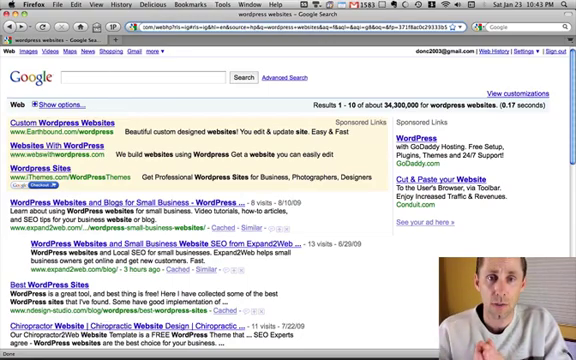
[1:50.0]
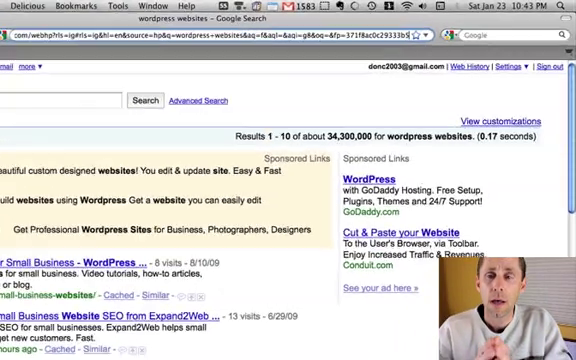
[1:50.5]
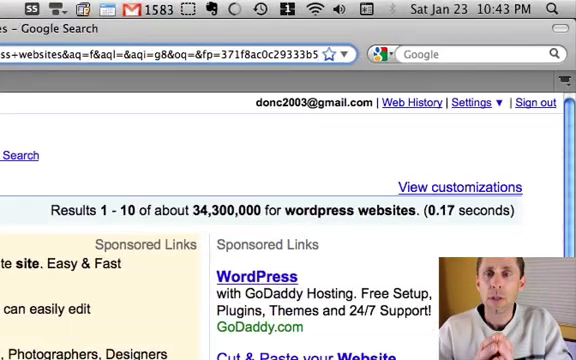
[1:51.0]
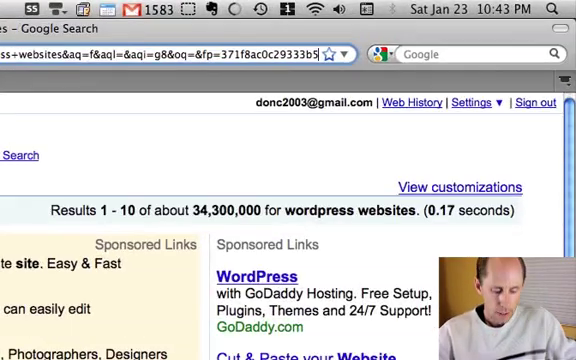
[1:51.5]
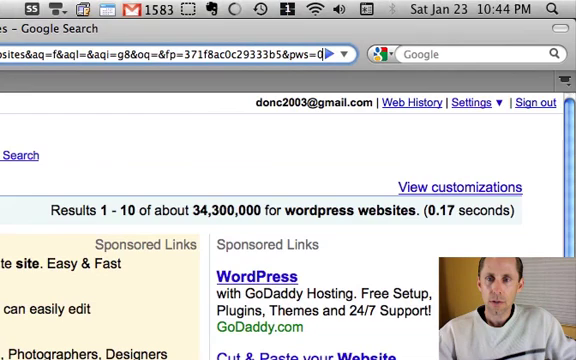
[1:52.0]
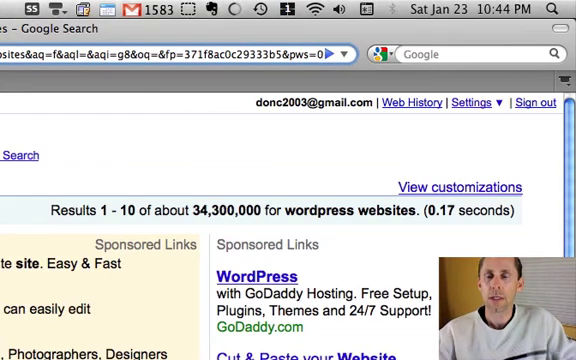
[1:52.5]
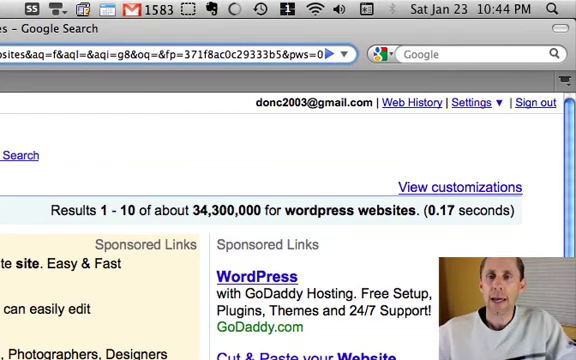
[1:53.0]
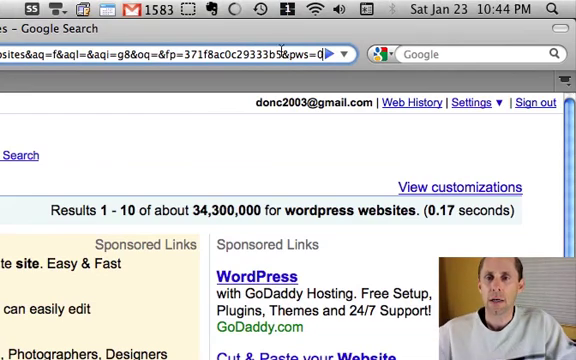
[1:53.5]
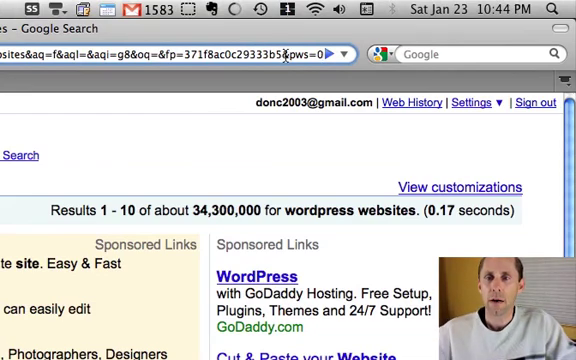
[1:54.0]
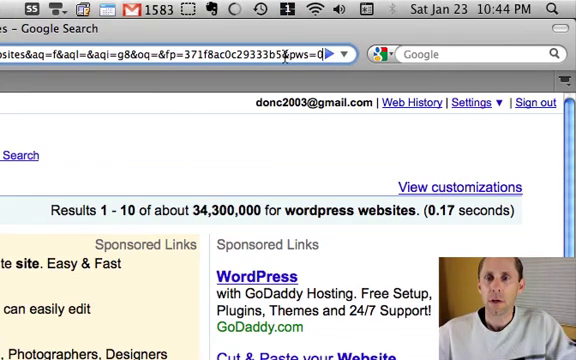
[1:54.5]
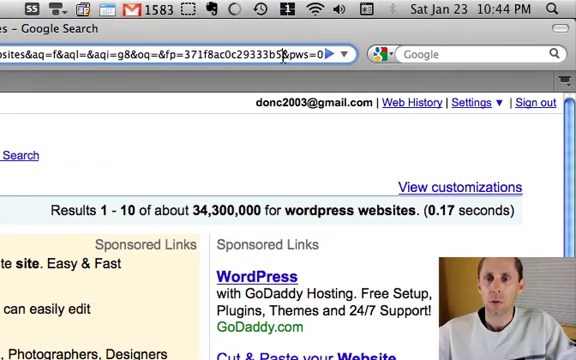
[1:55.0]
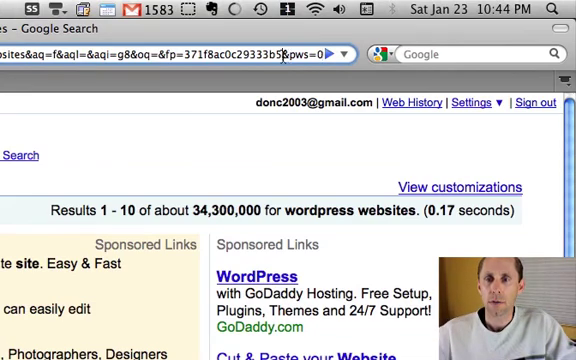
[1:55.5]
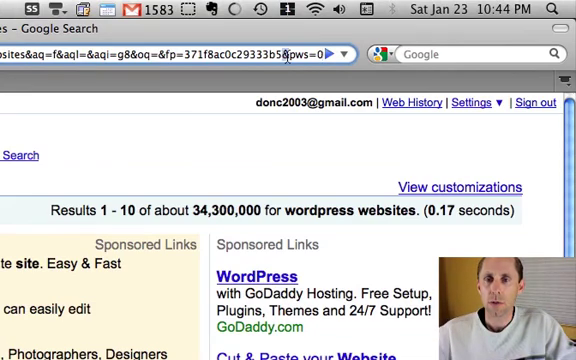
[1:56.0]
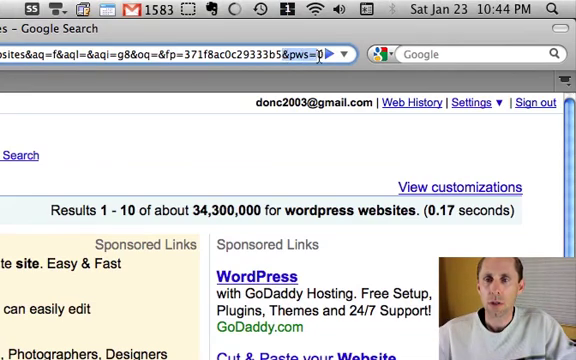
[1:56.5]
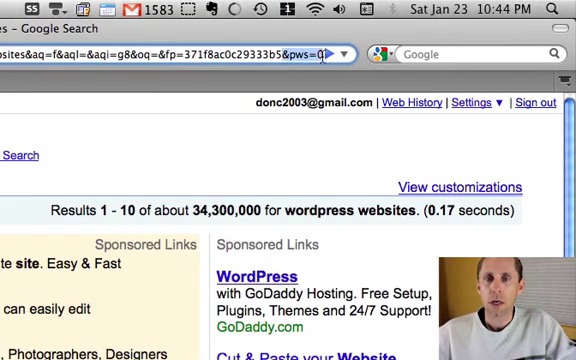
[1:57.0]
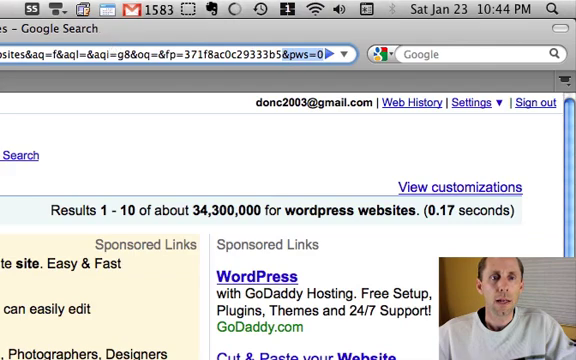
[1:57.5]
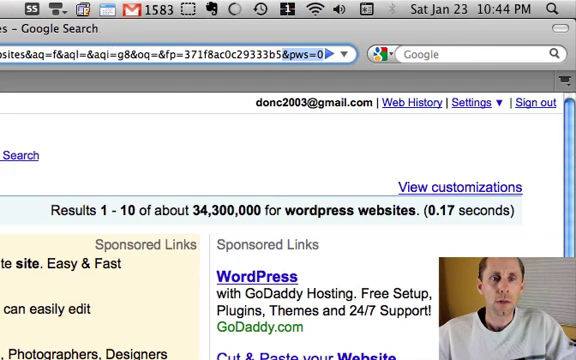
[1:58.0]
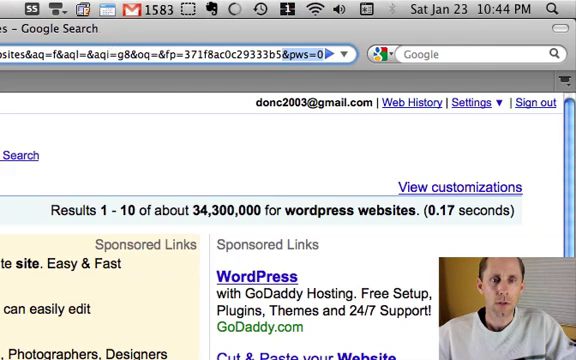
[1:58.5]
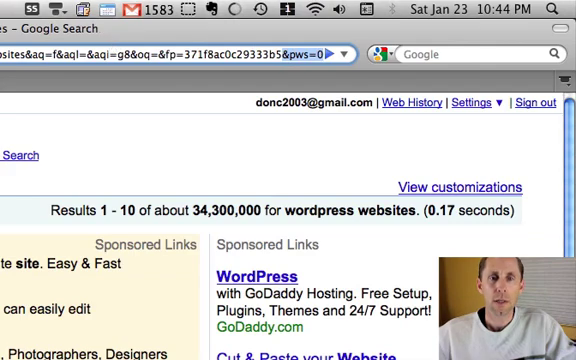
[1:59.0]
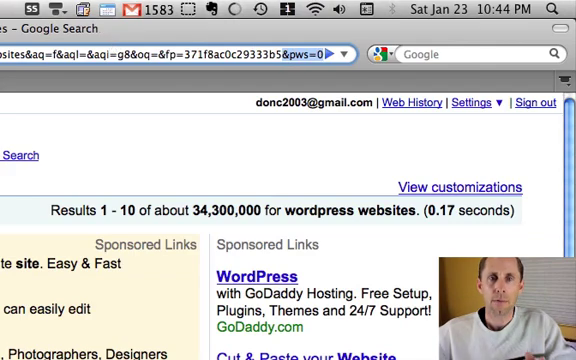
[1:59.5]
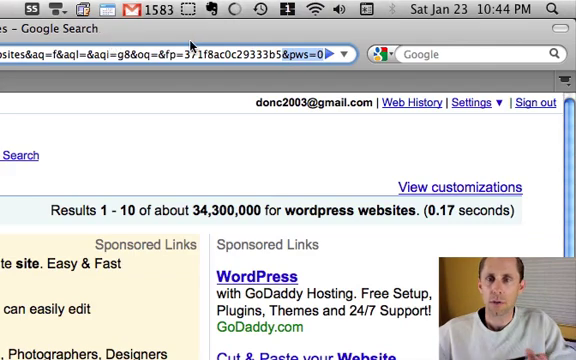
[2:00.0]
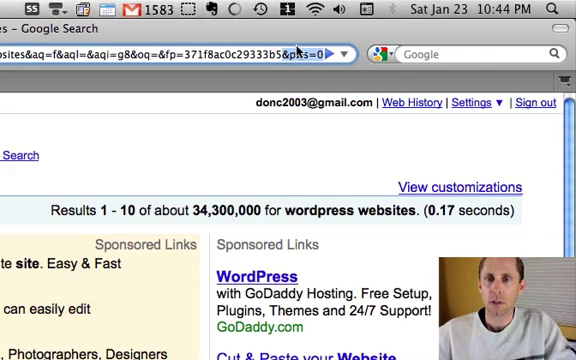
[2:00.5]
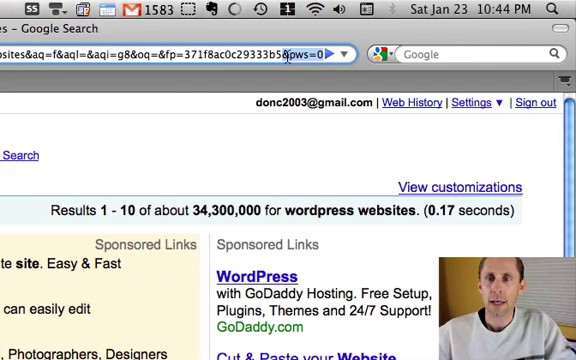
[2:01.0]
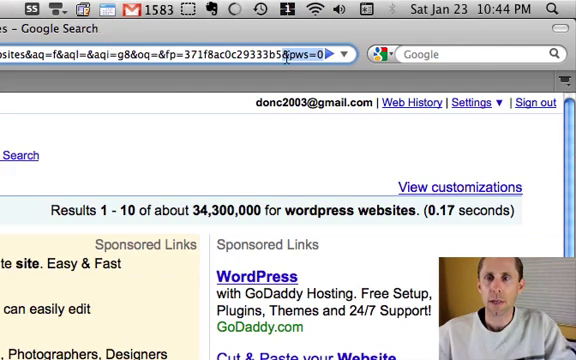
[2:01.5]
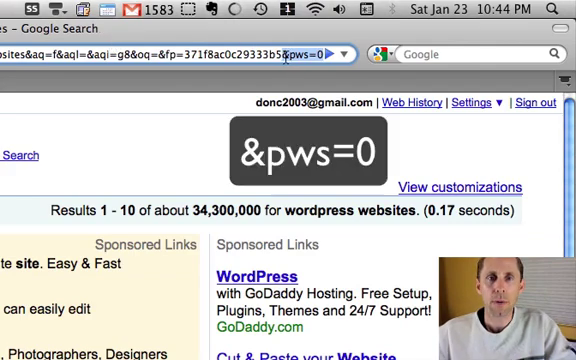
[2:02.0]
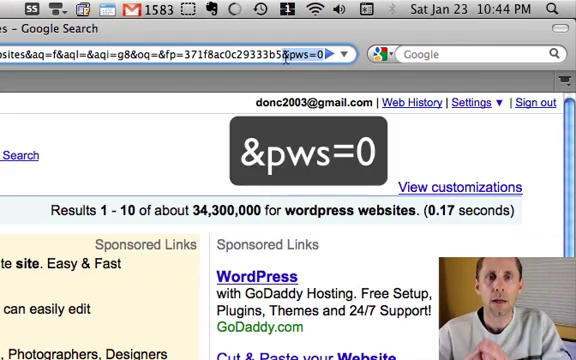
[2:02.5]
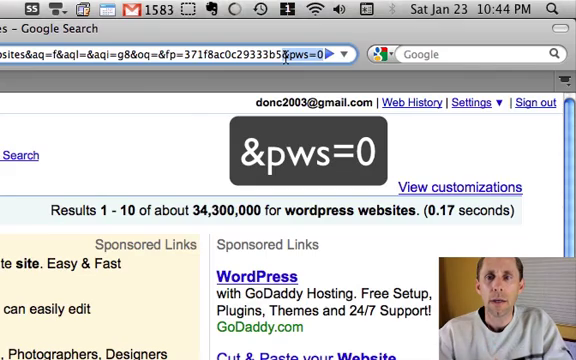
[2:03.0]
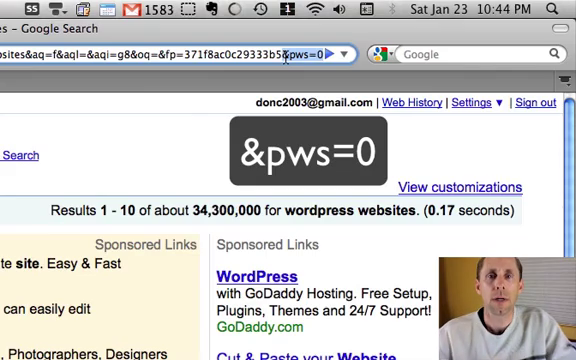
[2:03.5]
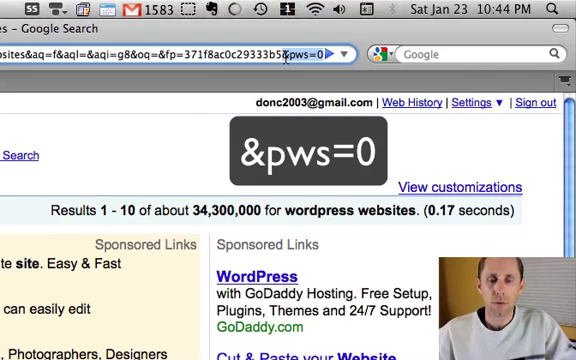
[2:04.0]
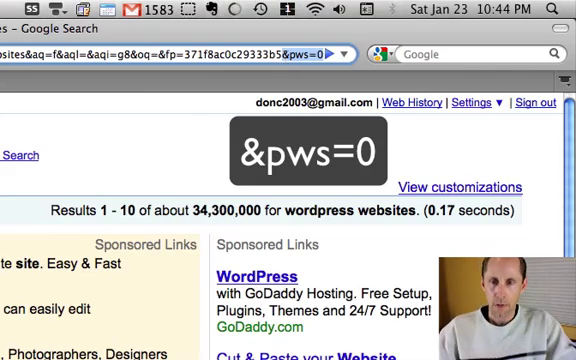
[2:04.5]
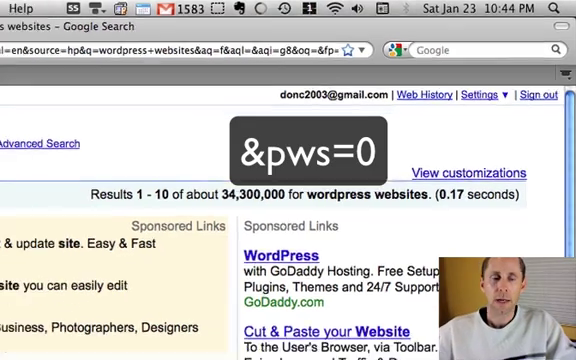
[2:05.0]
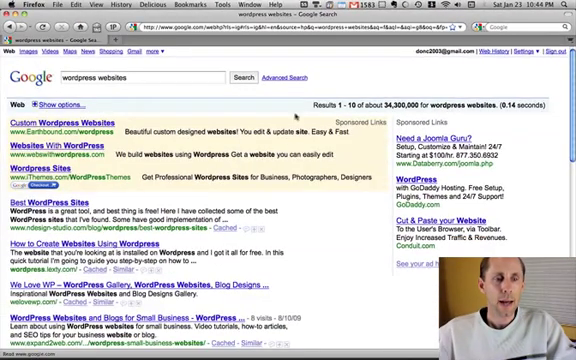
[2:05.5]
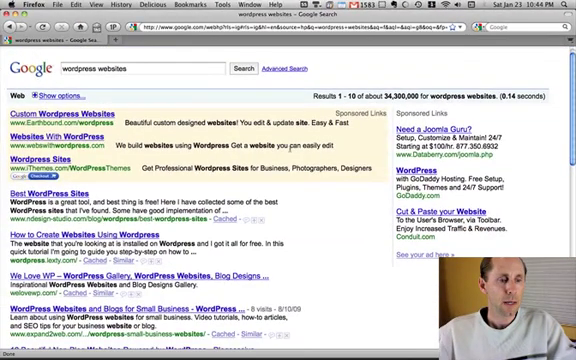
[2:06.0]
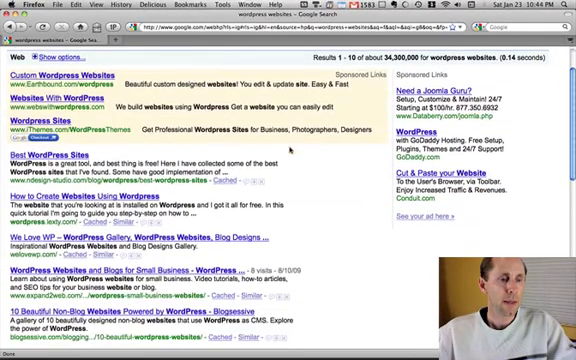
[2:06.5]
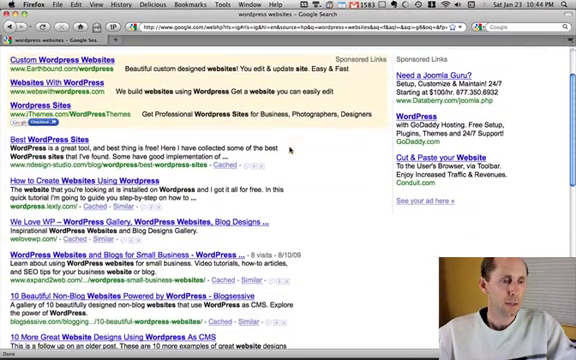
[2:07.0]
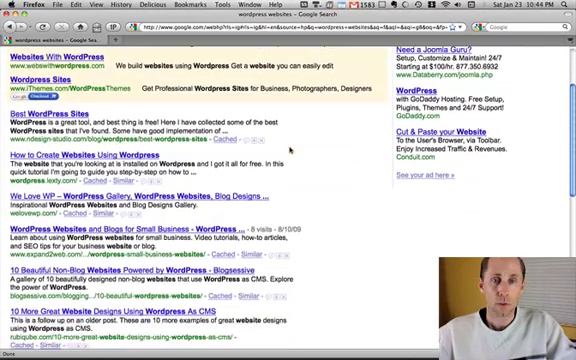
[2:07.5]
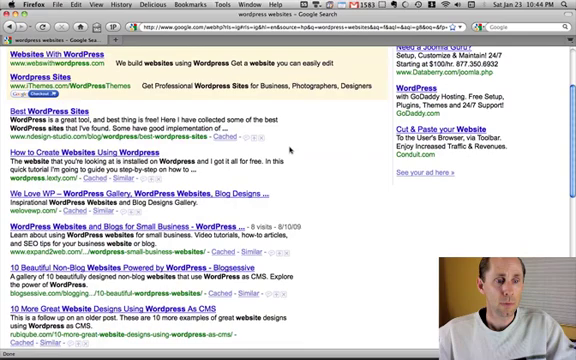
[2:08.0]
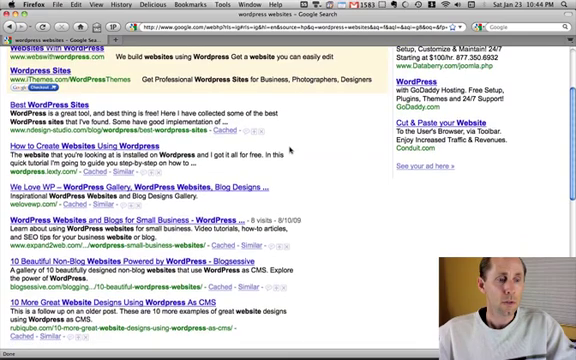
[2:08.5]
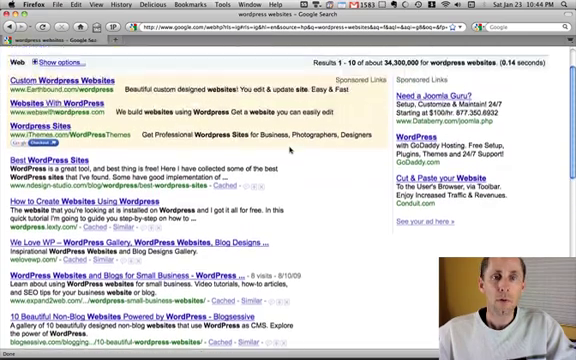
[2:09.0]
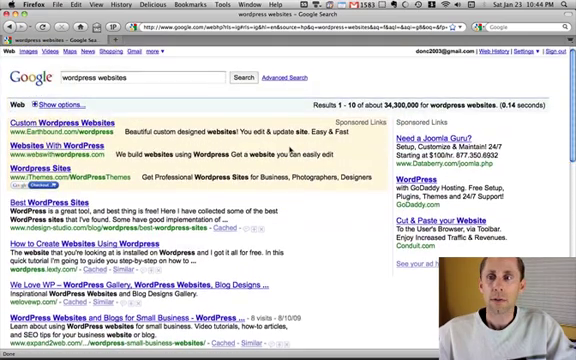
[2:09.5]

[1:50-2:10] The man in the lower right-hand corner continues speaking, still on the same search results page. The video zooms in to the upper right of the screen, showing Saturday, January 23rd, 10:44 p.m., most likely in 2010, and 1,583 unread emails. He is connected to Wi-Fi and is still signed in to Google with his email address, donc2003@gmail.com. After zooming in on the Firefox window, he clicks on the URL and modifies it by adding "&pws=0". He enters it and the page reloads, going back to the original search results shown at the beginning of the video, with his expand2web.com result at the very top. The sponsored ads remain the same.